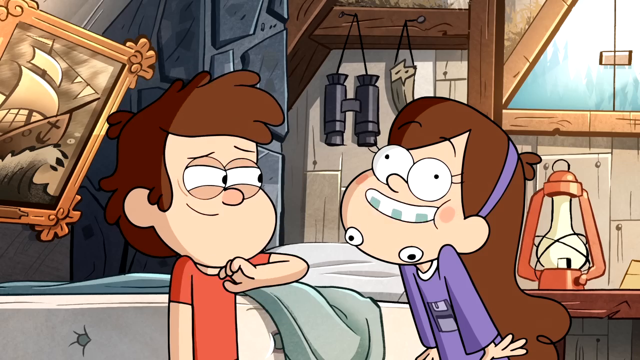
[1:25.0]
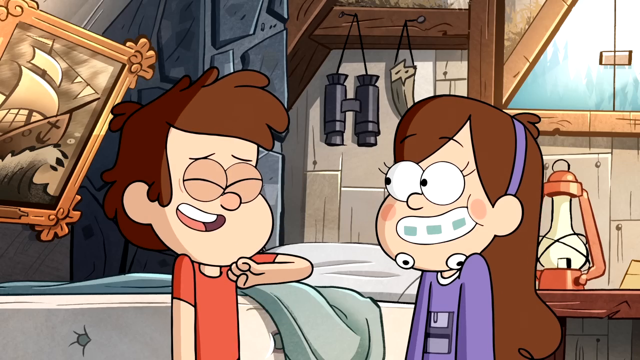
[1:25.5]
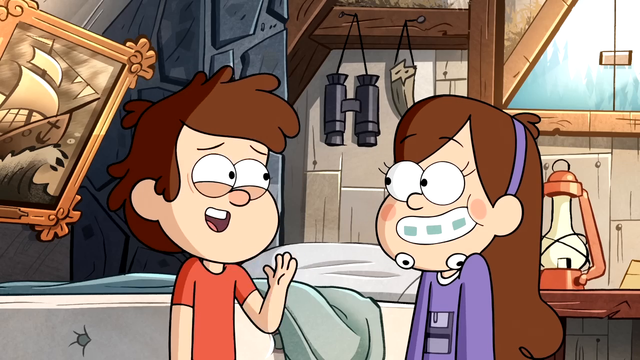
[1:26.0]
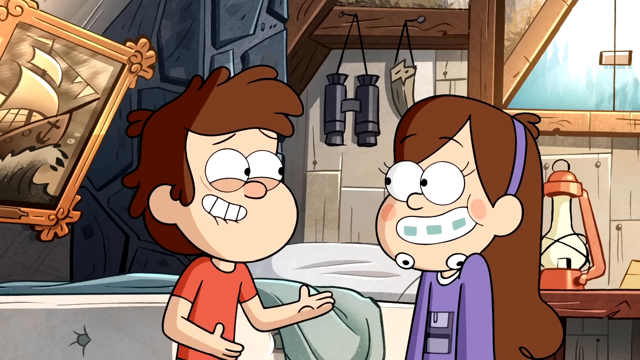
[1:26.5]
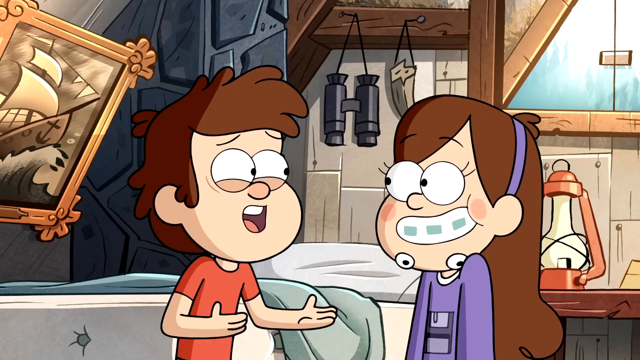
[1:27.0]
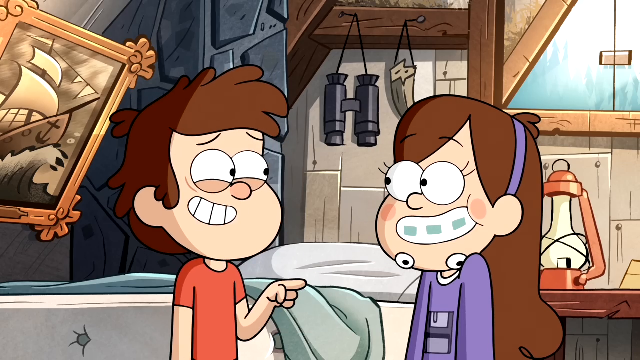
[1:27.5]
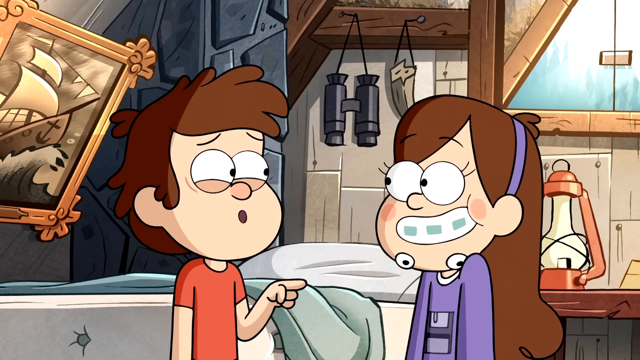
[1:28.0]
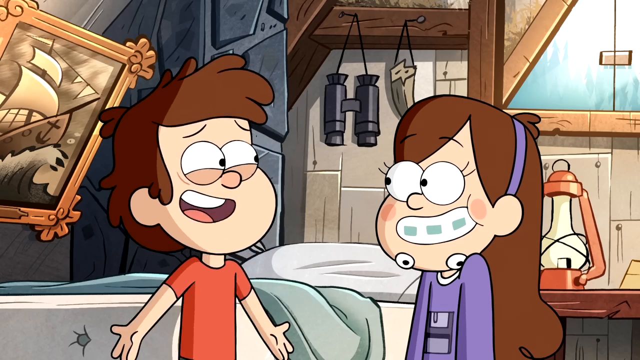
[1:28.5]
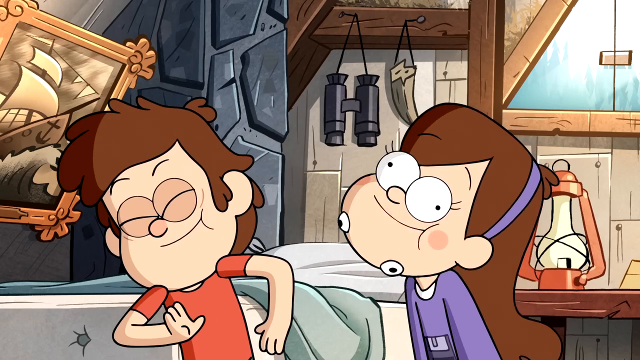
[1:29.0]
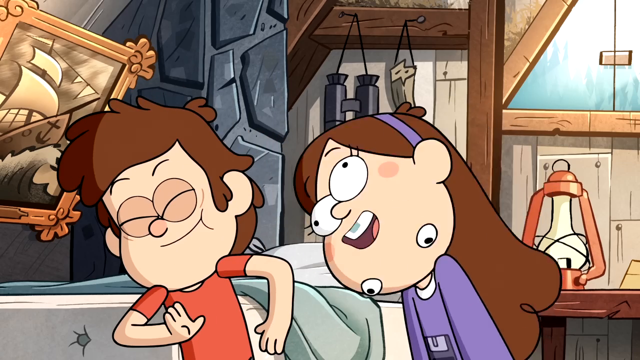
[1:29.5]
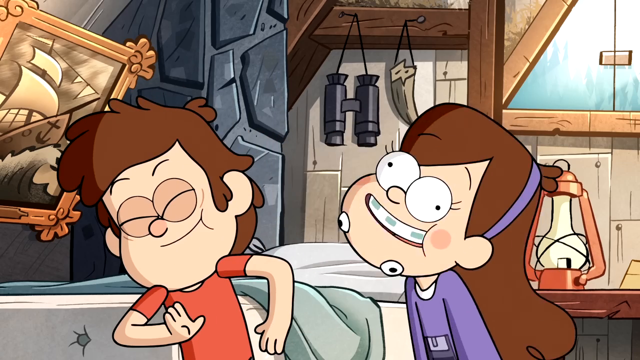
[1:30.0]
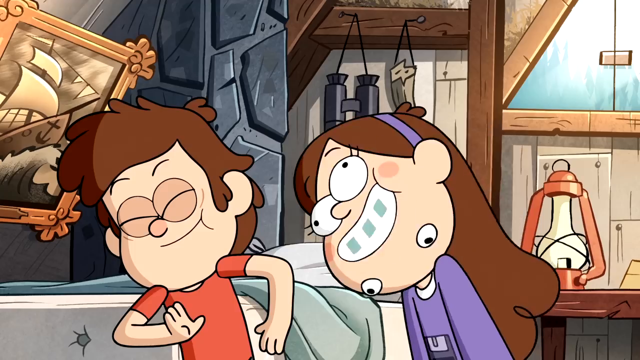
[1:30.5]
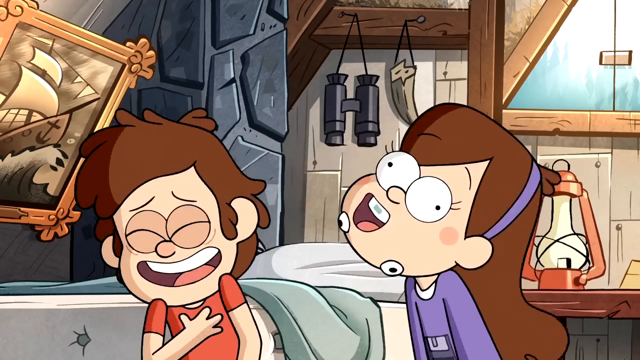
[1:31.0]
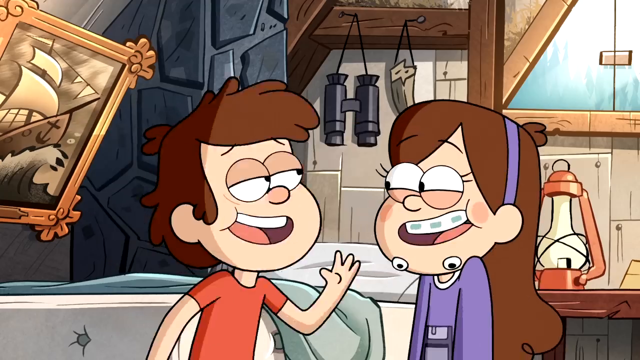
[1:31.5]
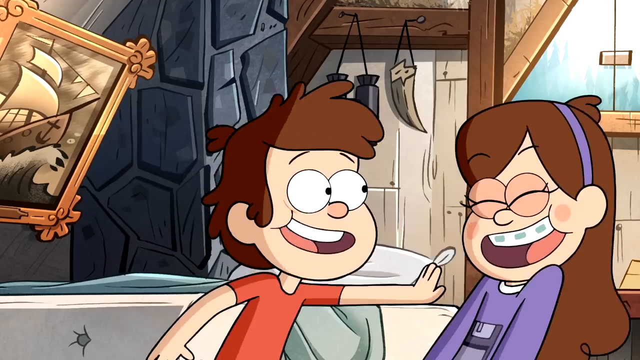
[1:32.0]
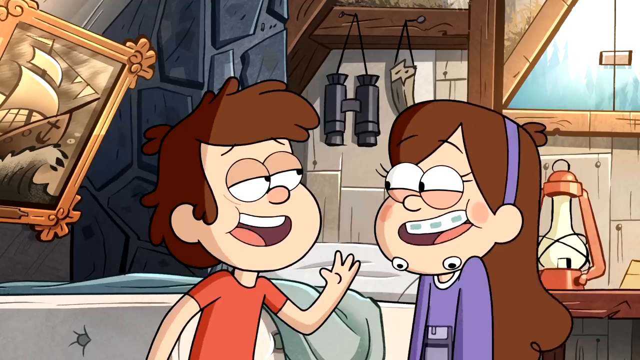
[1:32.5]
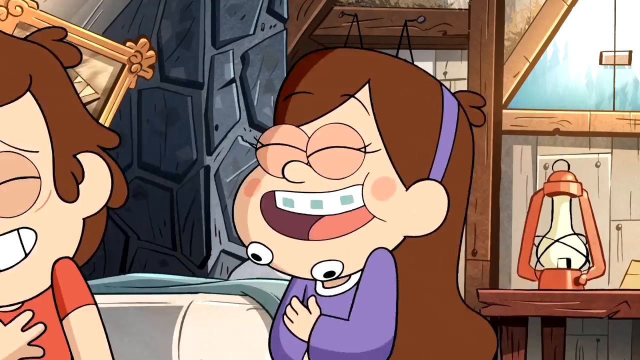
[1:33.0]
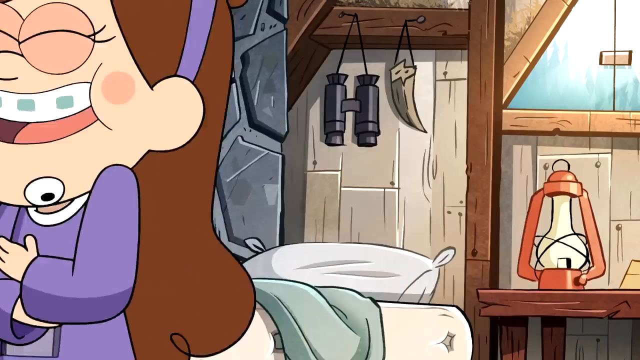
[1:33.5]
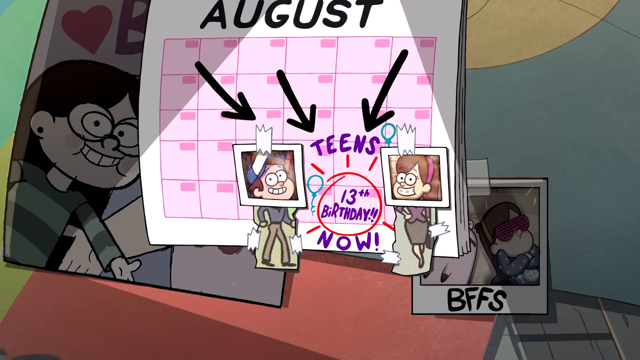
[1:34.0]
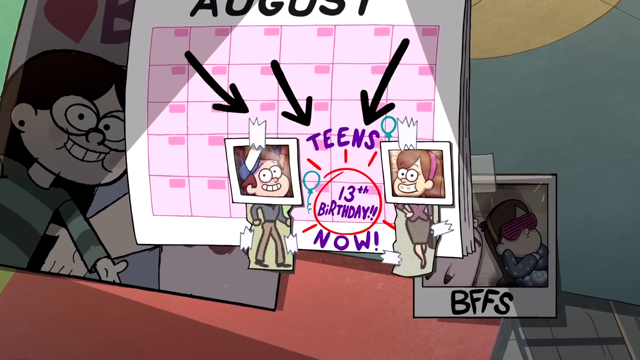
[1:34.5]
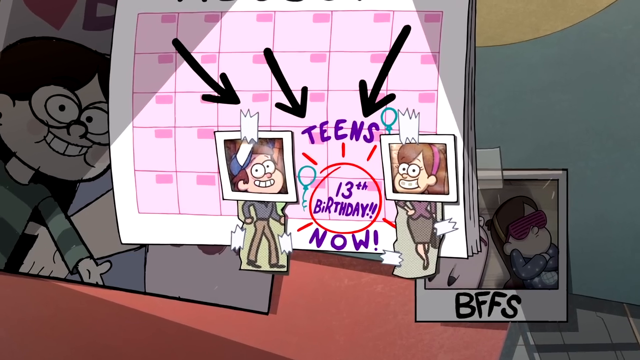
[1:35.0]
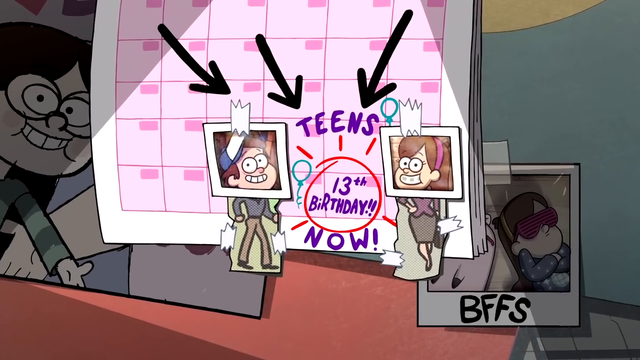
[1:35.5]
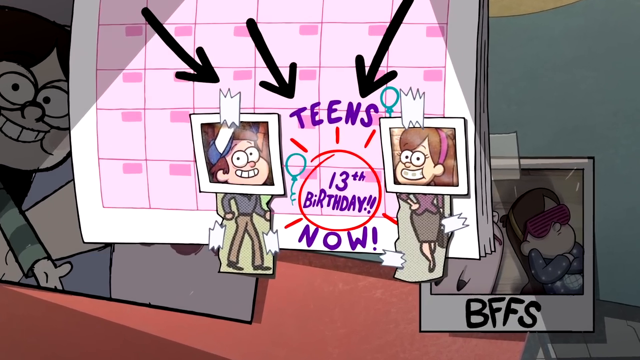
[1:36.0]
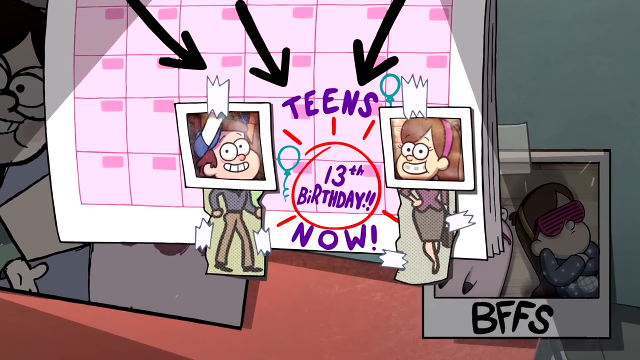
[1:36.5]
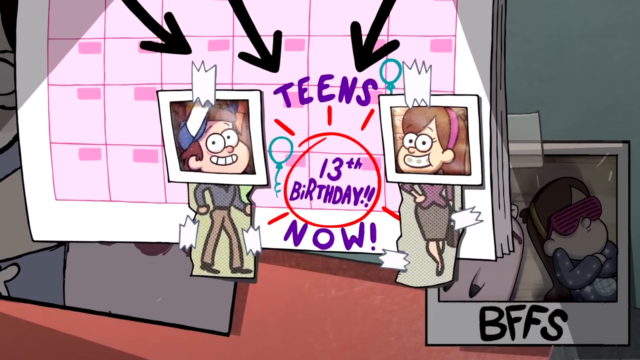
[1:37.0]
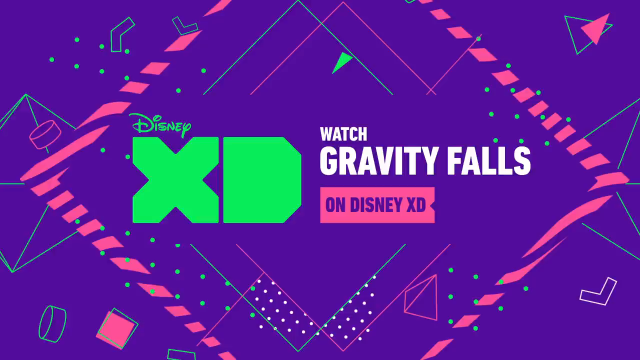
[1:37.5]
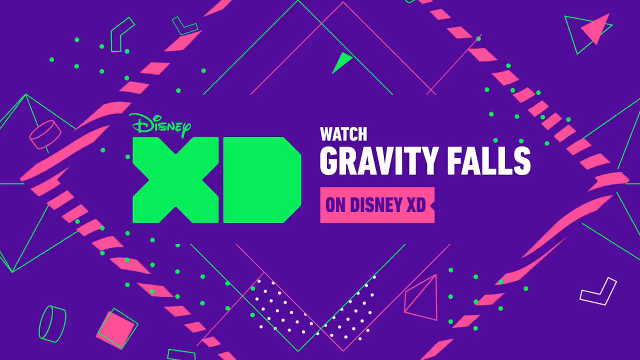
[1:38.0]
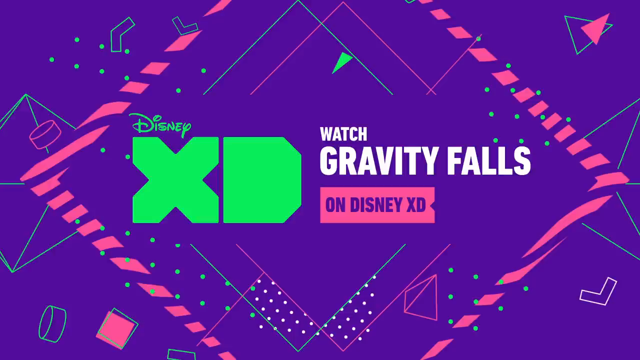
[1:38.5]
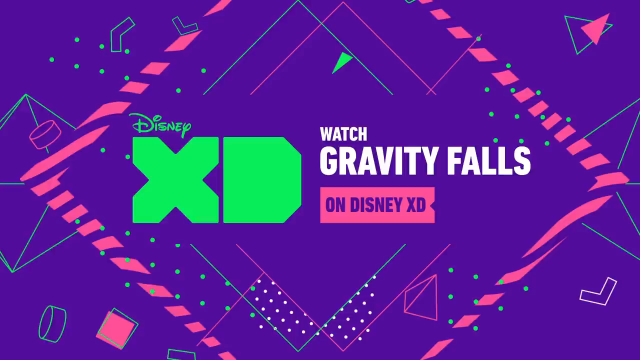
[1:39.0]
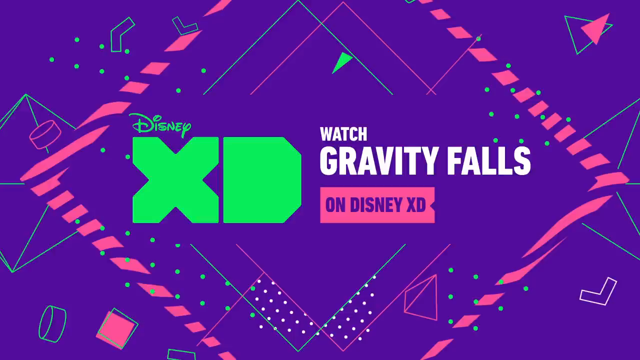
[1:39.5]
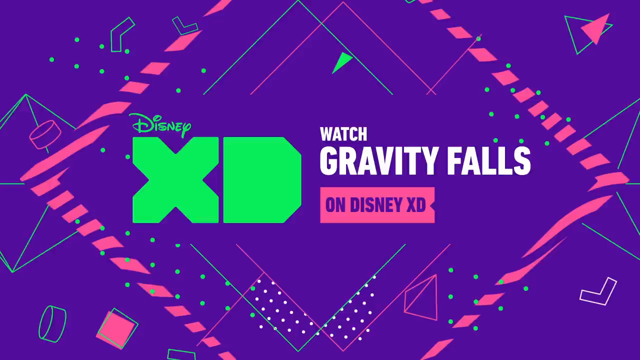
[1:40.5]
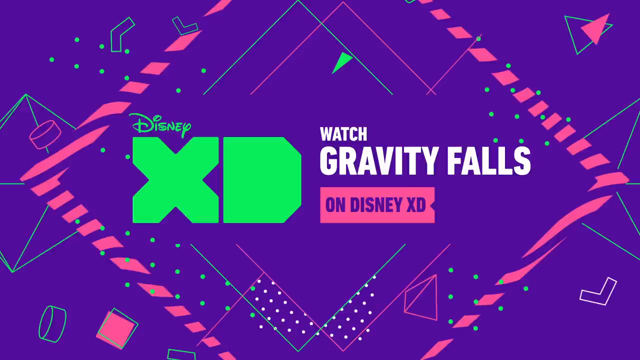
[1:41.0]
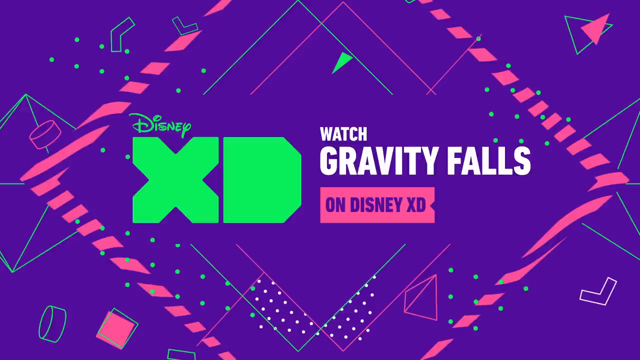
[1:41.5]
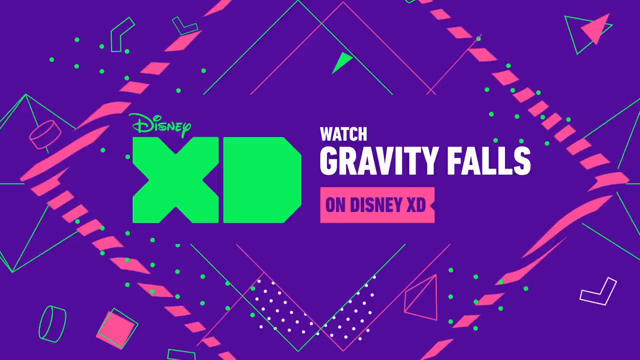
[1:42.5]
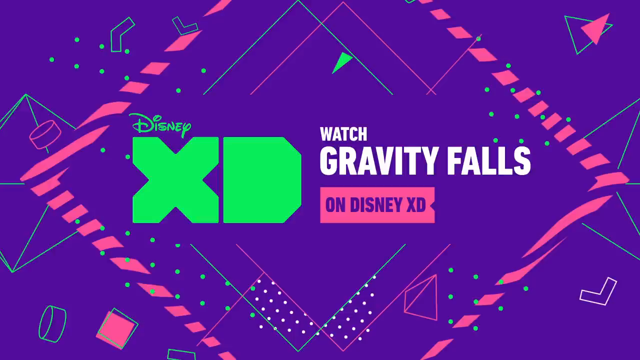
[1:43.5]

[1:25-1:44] The boy laughs with his fist up towards his chest and his eyes closed, turned towards the girl, who is smiling big. He puts his hands out as he keeps talking to her, still slightly squinting, smiling widely and pointing at her. She does a crazy thing with her eyes, kind of looking upwards, a bit cross-eyed, shaking her head back and forth. He laughs and kind of pushes her back as they keep talking, with his hand up in front of her. They laugh together and walk off the scene together, the girl with her arms slightly crossed. The camera kind of pans and slowly zooms into the calendar on the wall, where three black arrows point towards the "teens' 13th birthday now" section with the two pictures of the two characters. Then "Disney XD" pops up on the screen in green, followed by white text that says "Watch Gravity Falls" and purple text over a pink banner that says "On Disney XD," with wacky designs in the background in pink, purple and lime green. This stays on screen until the video ends.